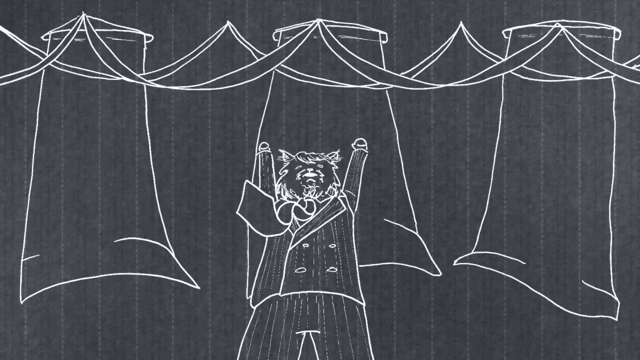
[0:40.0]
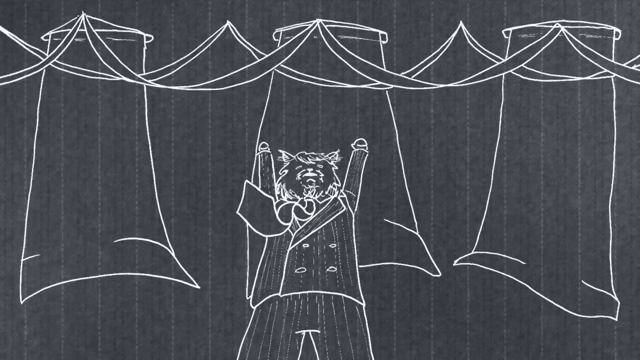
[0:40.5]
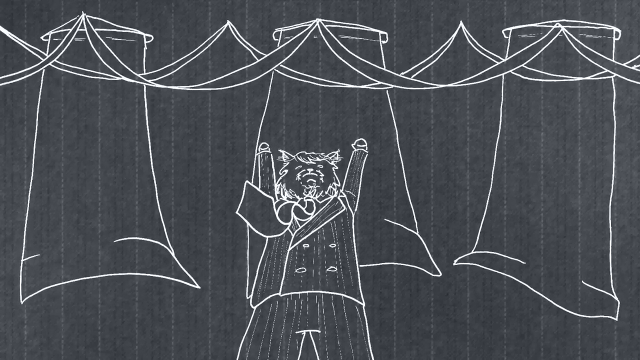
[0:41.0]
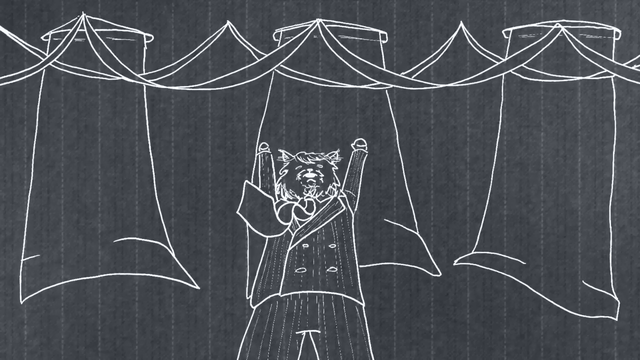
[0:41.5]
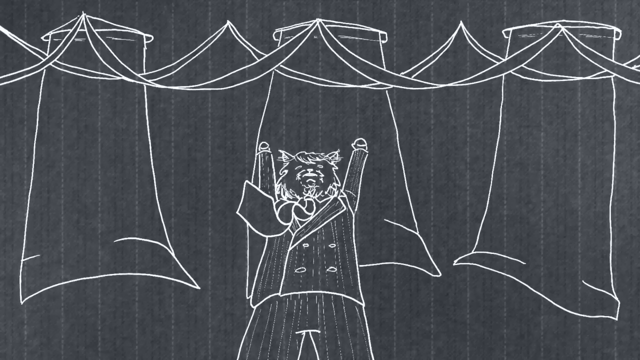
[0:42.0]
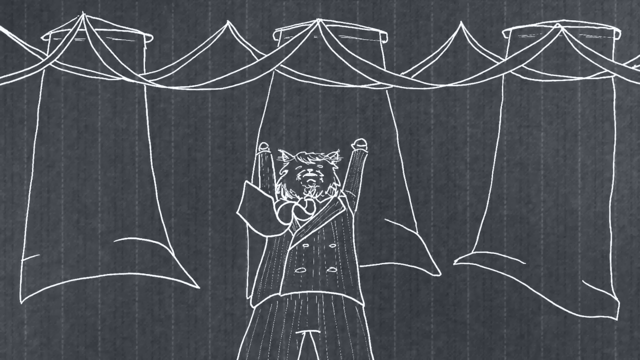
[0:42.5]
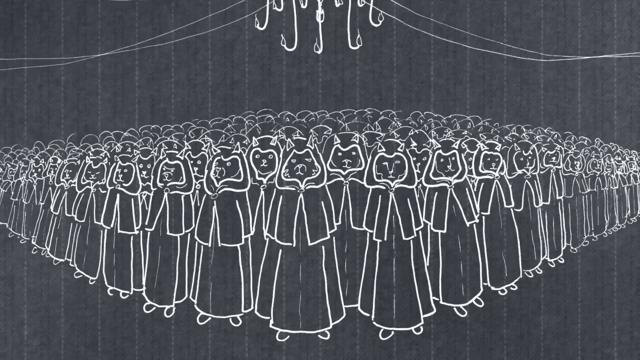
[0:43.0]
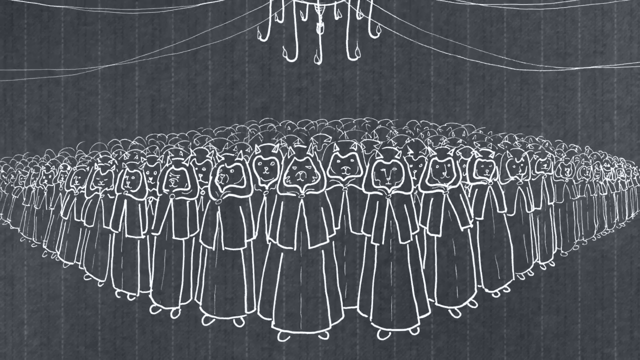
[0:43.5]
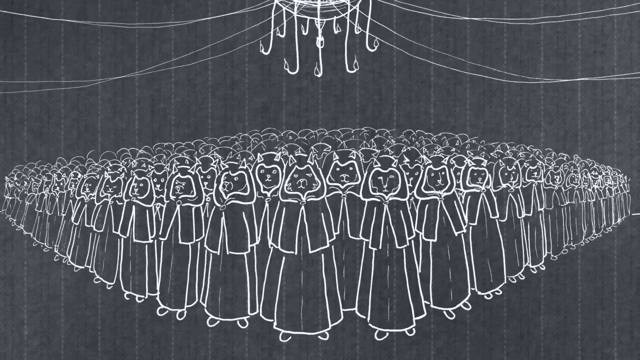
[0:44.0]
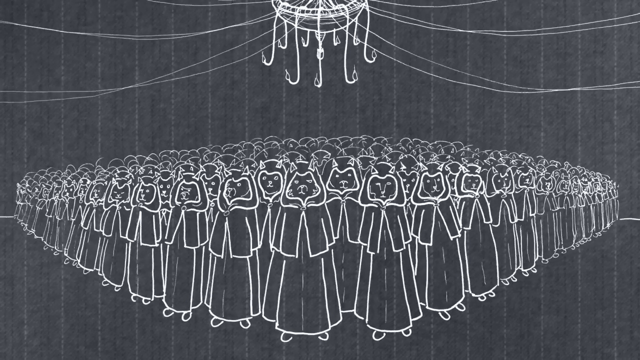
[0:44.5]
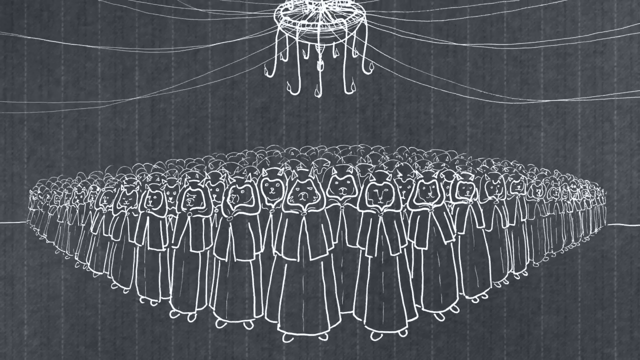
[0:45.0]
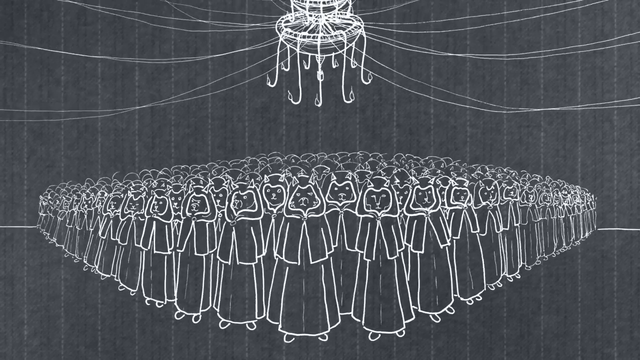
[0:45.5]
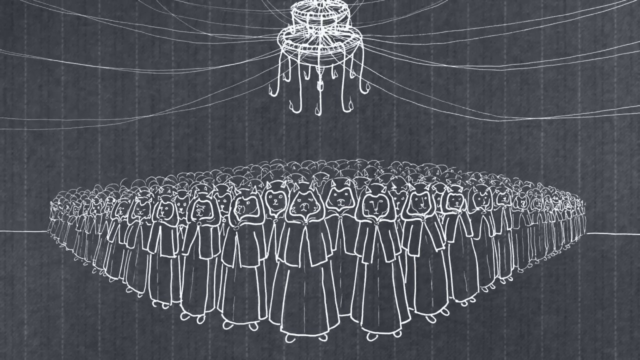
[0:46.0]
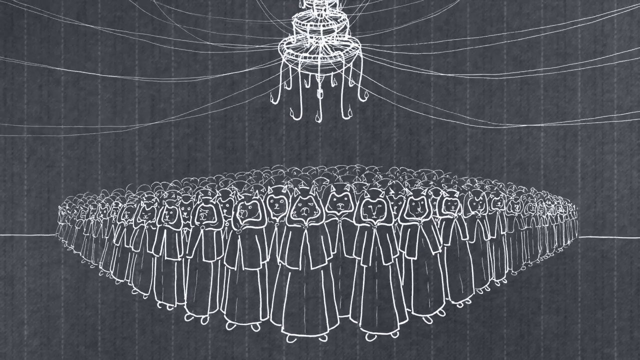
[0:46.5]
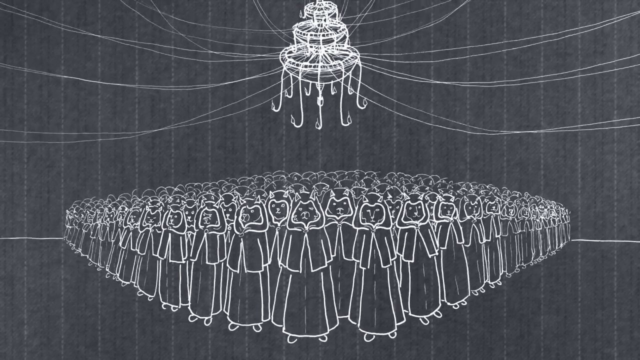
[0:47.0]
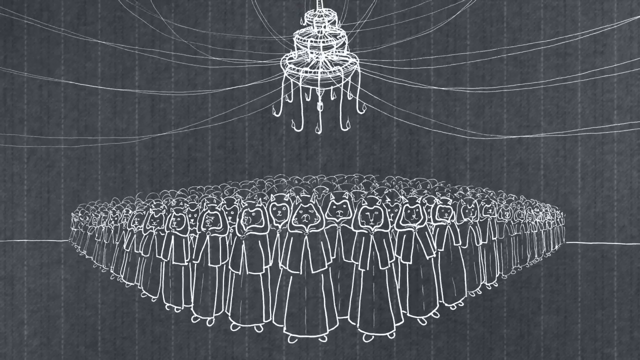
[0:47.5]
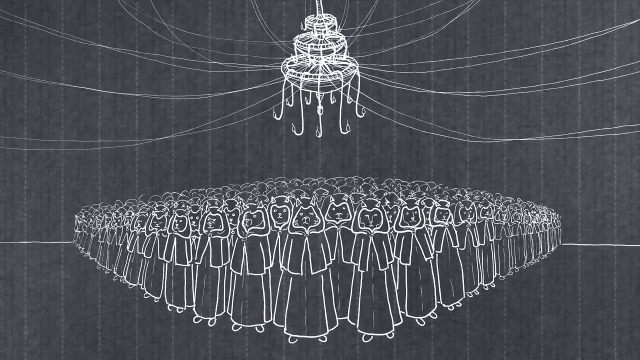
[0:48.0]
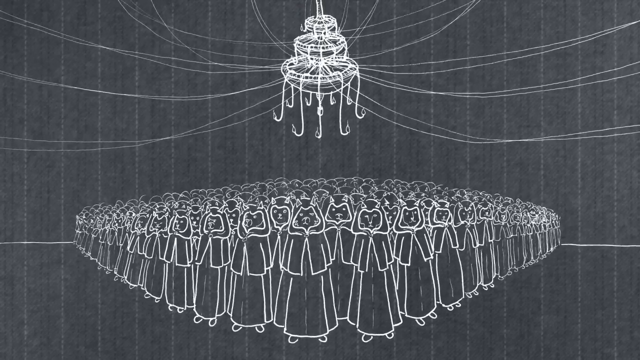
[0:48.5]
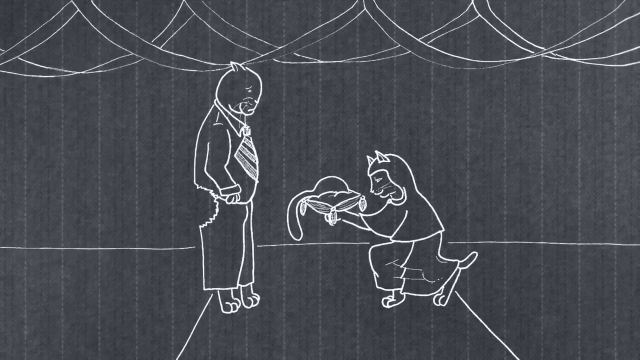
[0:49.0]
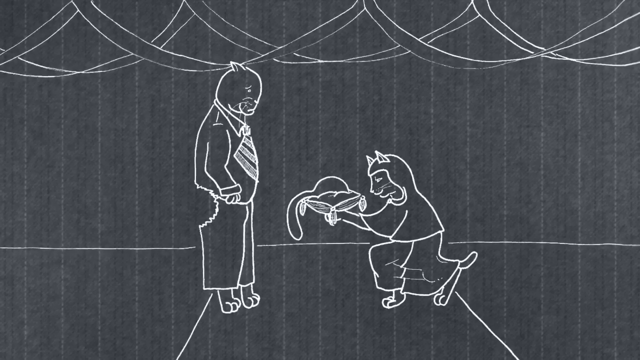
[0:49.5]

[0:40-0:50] The illustrations in each scene are drawn entirely in white lines against a gray backdrop with a faint pattern that makes it look almost like fabric. First, an anthropomorphic cat in a business suit raises his arms above his head in victory; behind him are patterns that look like banners or curtains hanging on a wall, with ribbons stretched from one to the other. The scene switches to a large group of animals that look like cats, wearing hoods and robes, standing in a crowd in a triangular pattern. The camera pulls out to reveal a chandelier hanging above them that looks like it has curved hooks hanging from the bottom, with many crisscrossing strings running from the chandelier to the corners of the ceiling. Then one of these creatures bows in front of another cat, with a pillow in its hand and something lying on the pillow. The standing cat appears to have a chunk of its backside missing, as if something has taken a bite out of it.